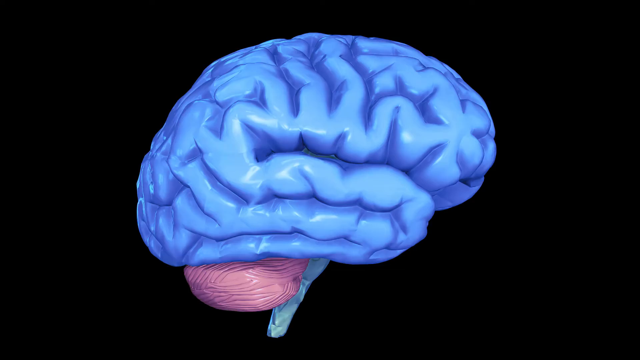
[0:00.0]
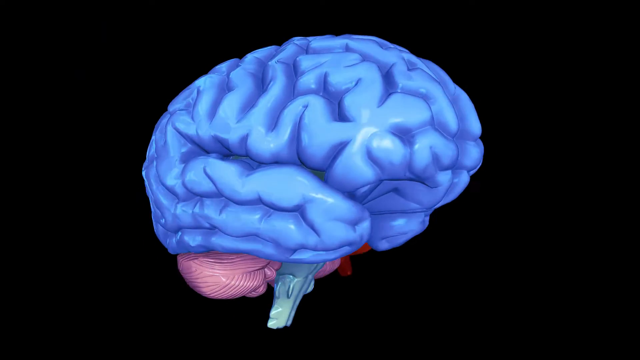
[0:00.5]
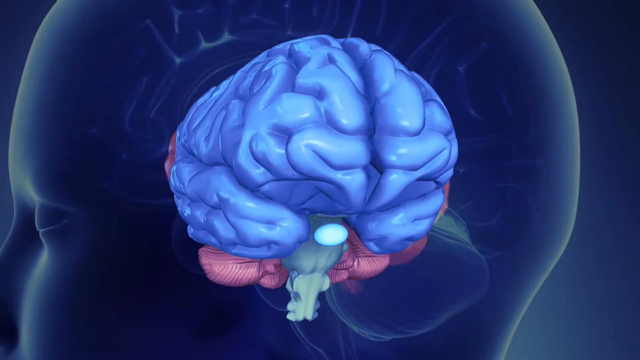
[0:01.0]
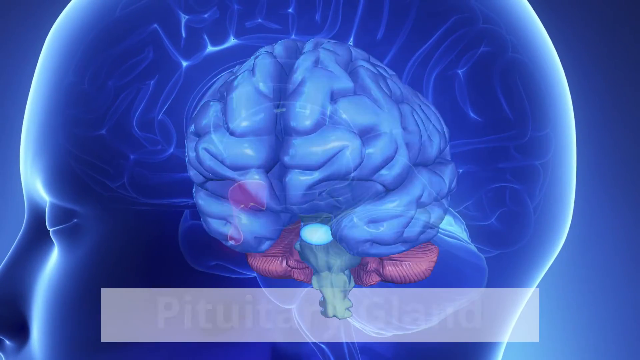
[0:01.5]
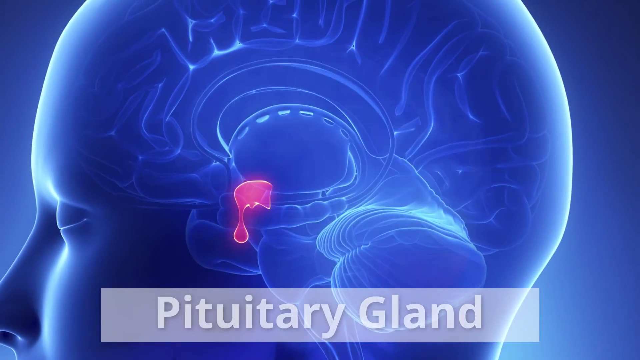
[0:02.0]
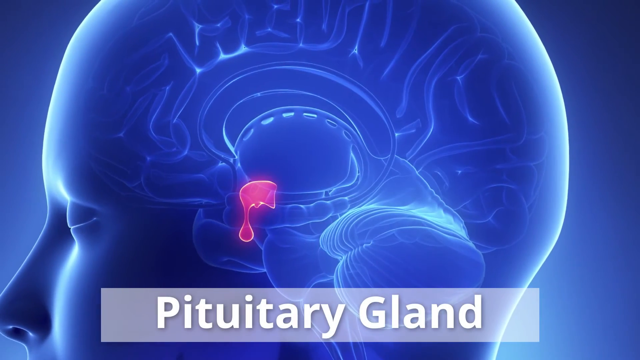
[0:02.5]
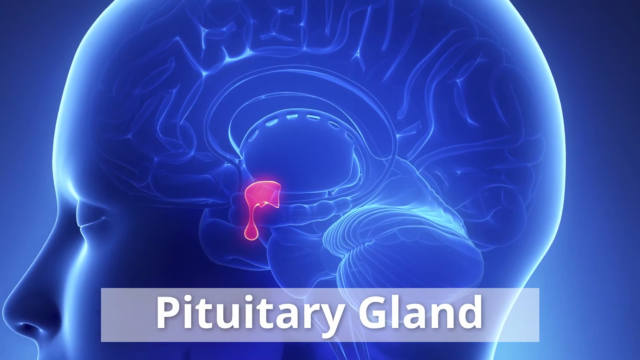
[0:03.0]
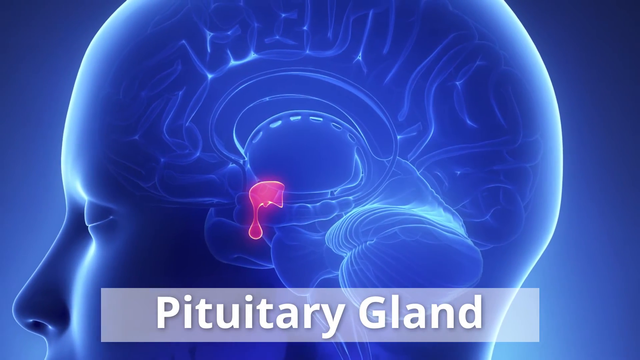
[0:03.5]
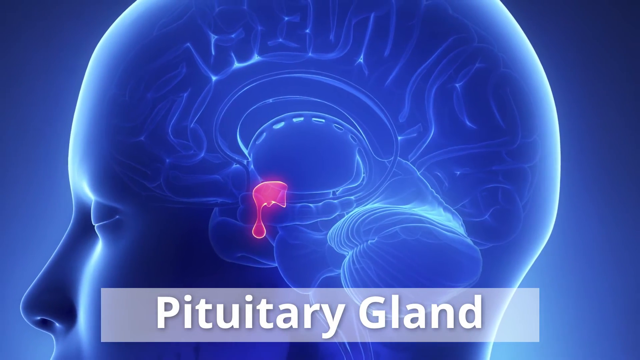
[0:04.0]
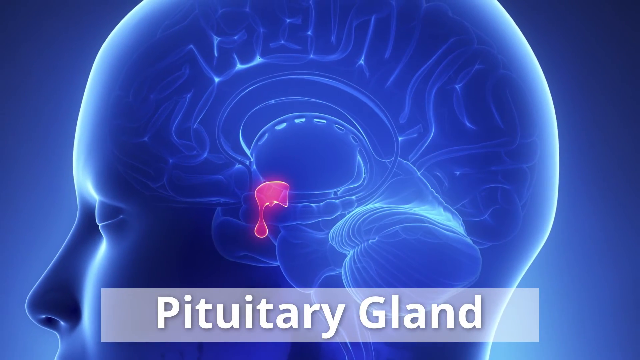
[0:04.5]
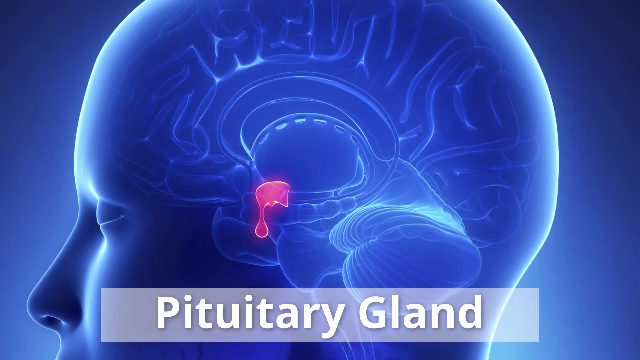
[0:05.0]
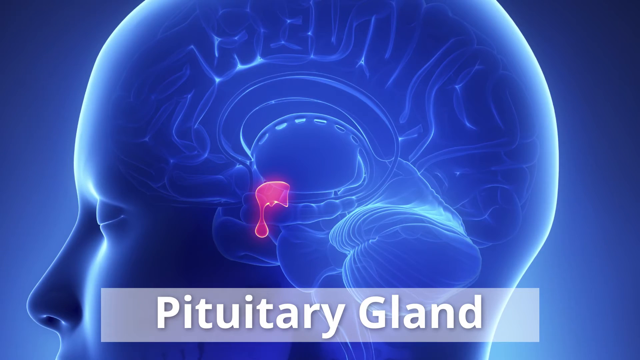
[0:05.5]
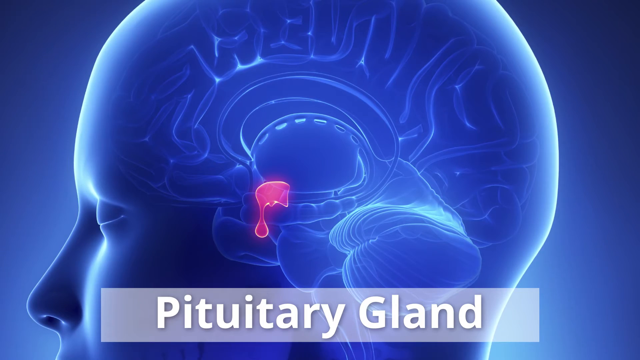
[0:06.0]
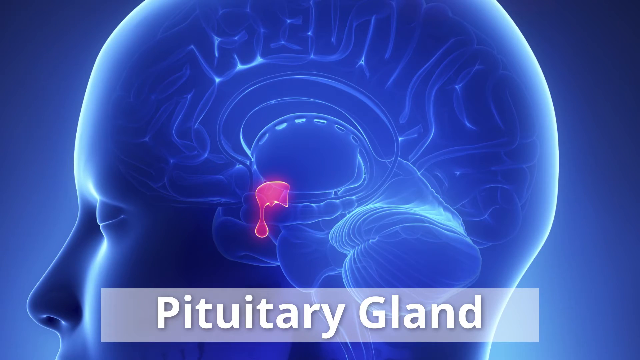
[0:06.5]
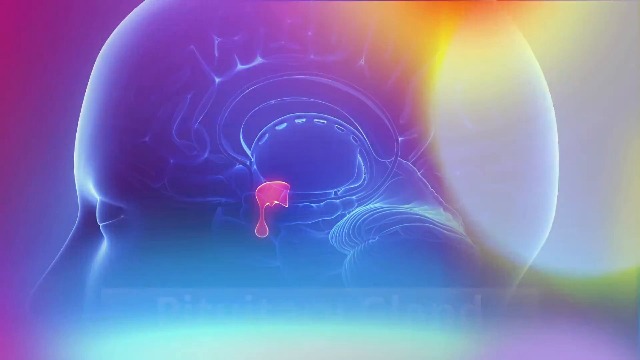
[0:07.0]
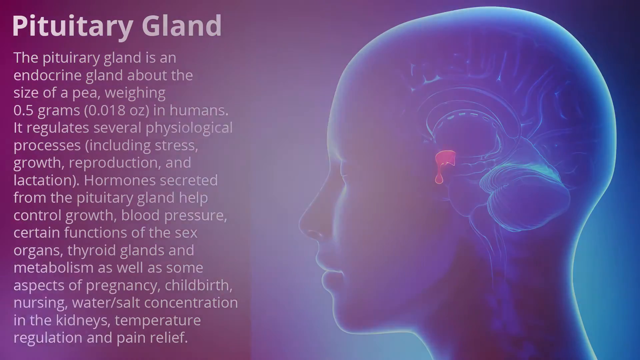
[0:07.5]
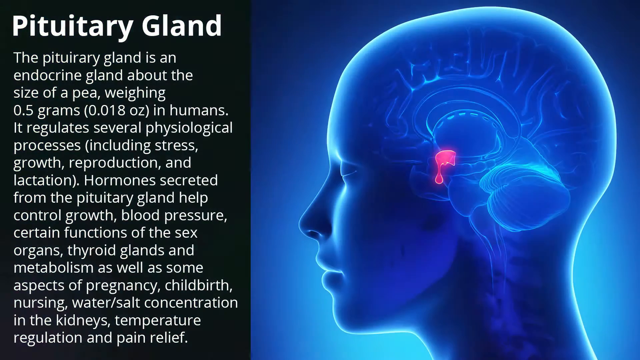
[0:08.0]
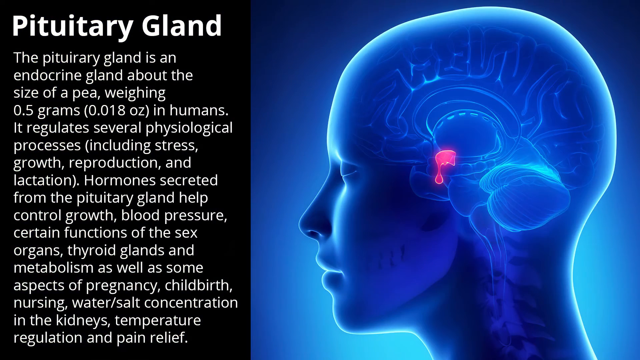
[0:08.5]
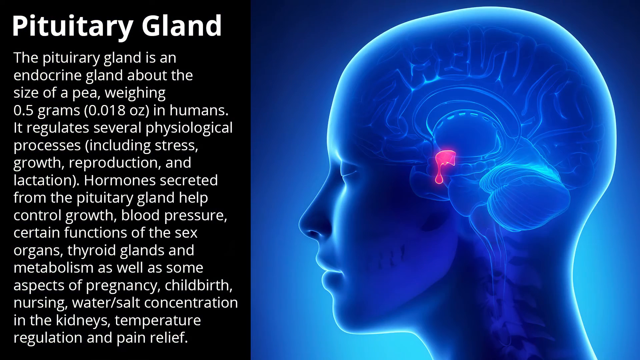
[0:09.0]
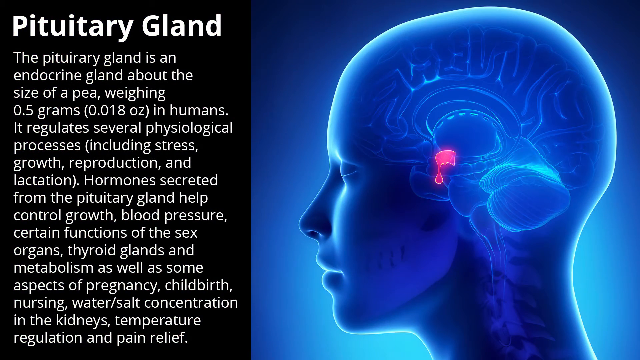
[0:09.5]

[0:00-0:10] A blue brain appears, with a brainstem running from the middle downwards to the edge of the screen and a pink cerebellum. The main area of the brain is blue and consists of many folds. The brain rotates clockwise from left to right, and as it does so it fades out, revealing the outline of a person's head with a brain inside. A small part of the brain, the pituitary gland, is highlighted in pink, with text underneath that says "the pituitary gland". The camera zooms out away from the head, pauses, and the video transitions to a new slide with more information about the pituitary gland.